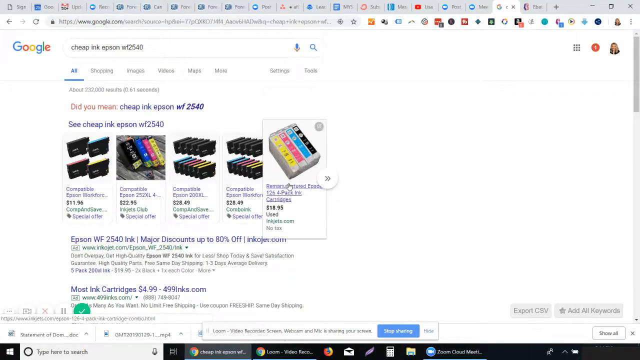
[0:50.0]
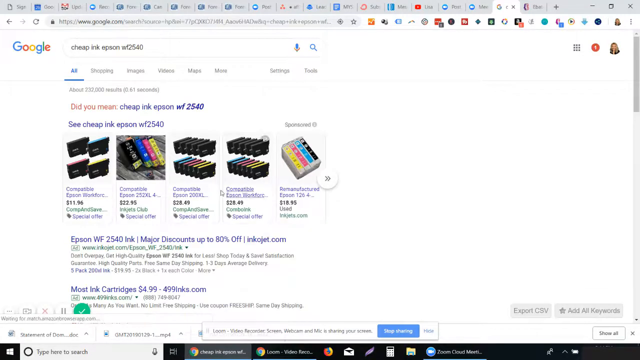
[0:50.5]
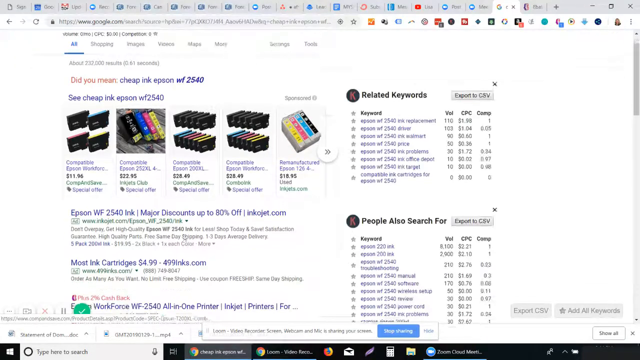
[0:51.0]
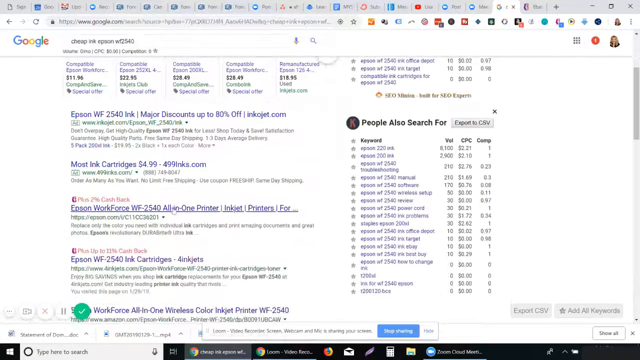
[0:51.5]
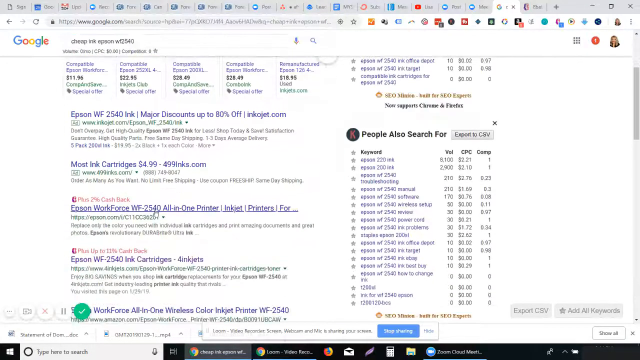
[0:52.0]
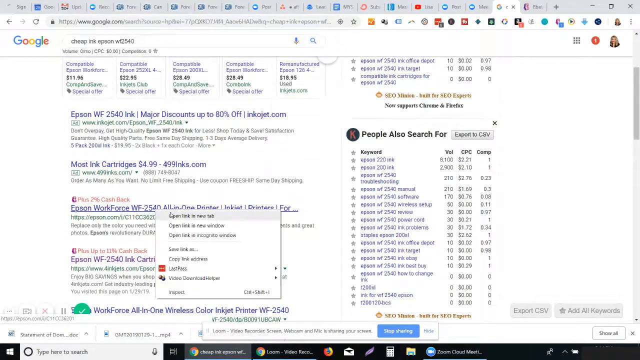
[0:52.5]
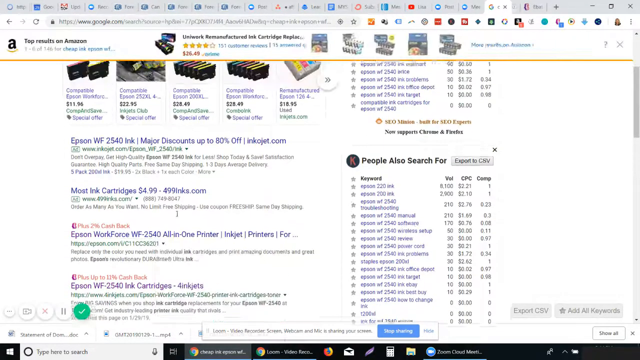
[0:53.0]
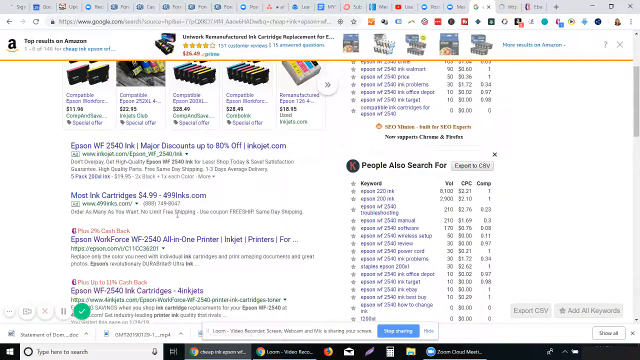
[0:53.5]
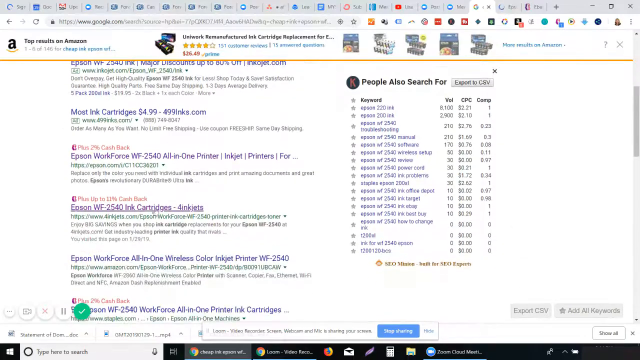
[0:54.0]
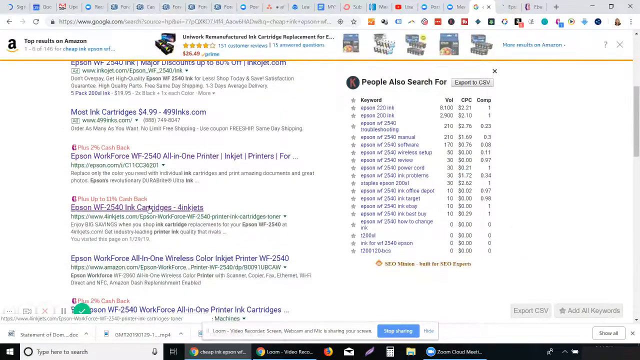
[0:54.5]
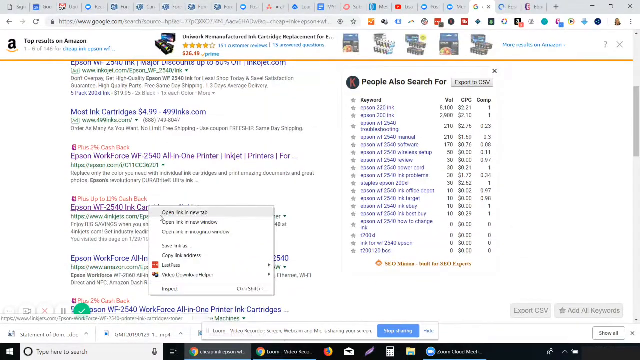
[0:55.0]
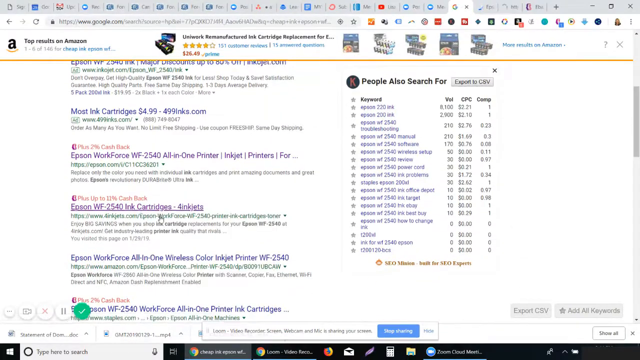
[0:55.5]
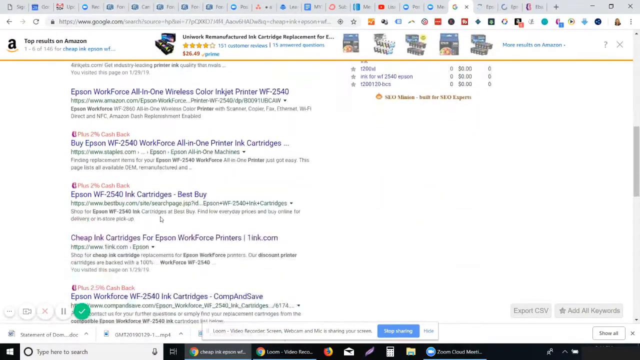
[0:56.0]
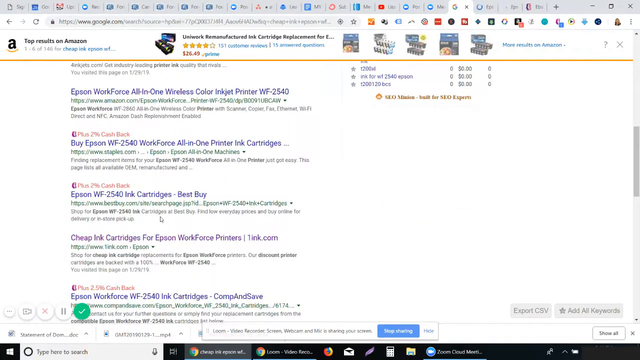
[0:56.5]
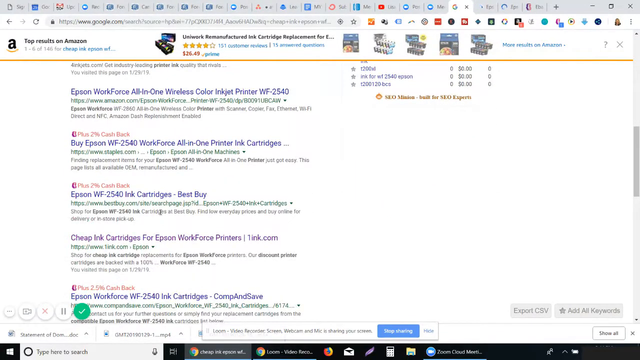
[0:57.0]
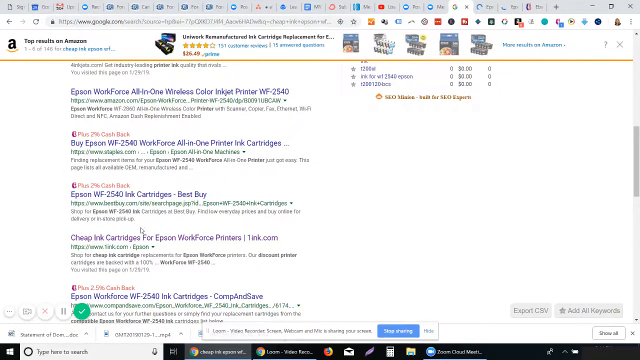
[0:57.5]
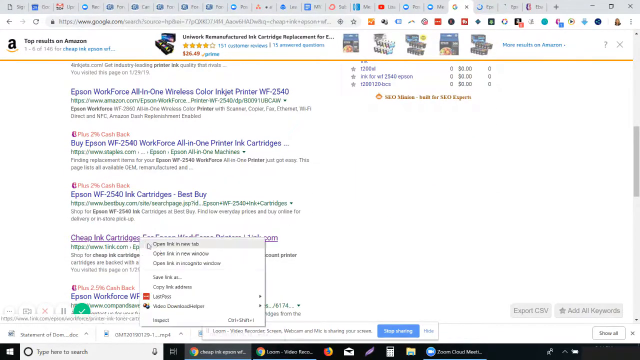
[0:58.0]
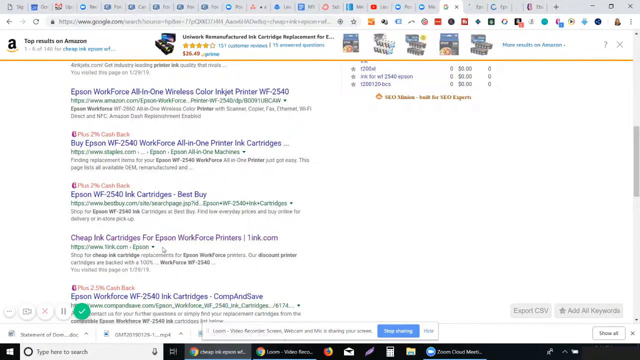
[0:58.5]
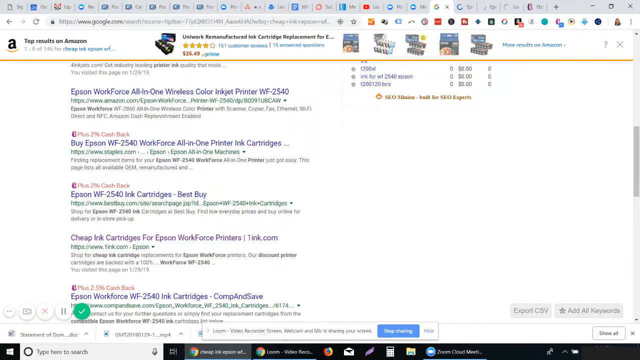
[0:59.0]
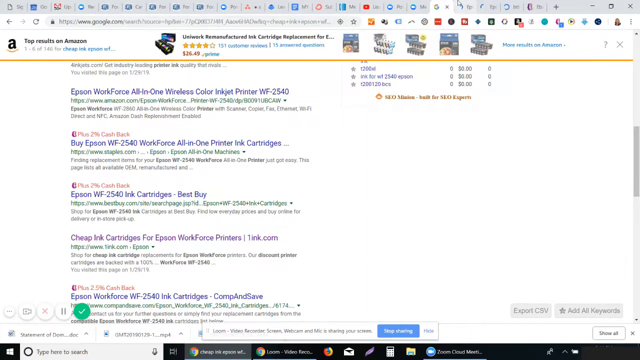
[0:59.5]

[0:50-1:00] On Google, the person searches for cheap ink for an Epson printer. The printer model is blurry, possibly "WF" and "2540." Google shows "did you mean cheap ink" with the same numbers, apparently because no space was typed between them. Various inks appear in the results, including from inkjet.com. The person scrolls down to "workforce," scrolls down again, and keeps scrolling.